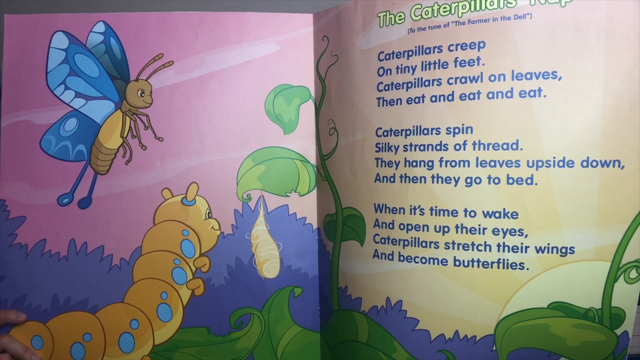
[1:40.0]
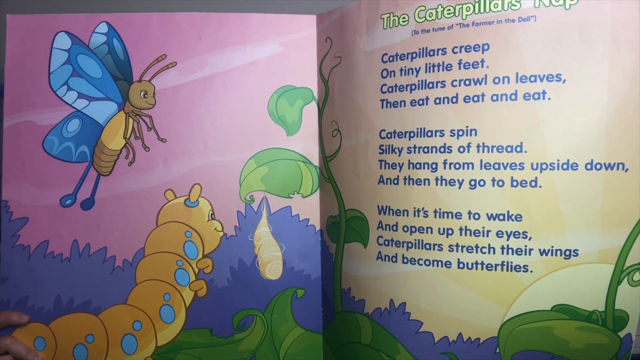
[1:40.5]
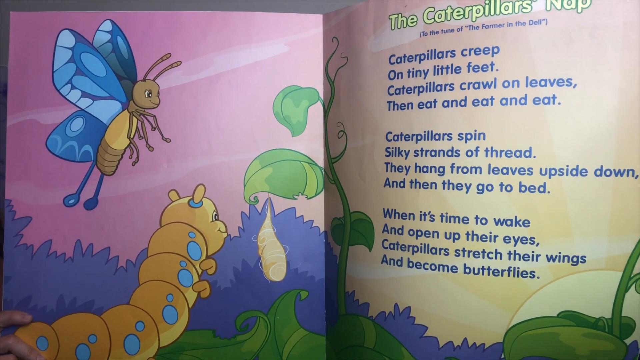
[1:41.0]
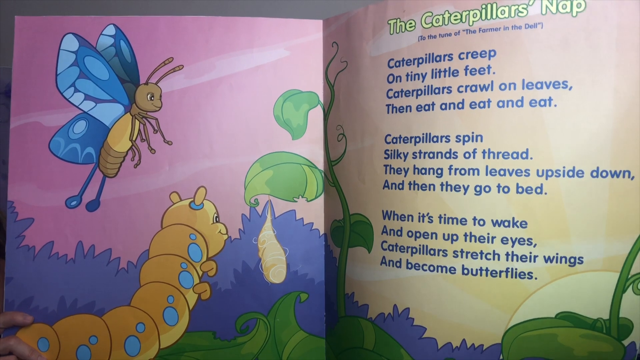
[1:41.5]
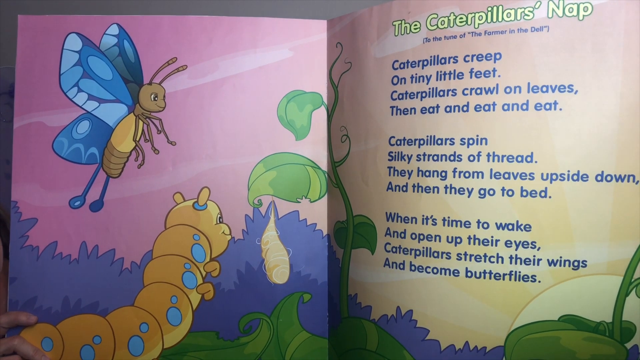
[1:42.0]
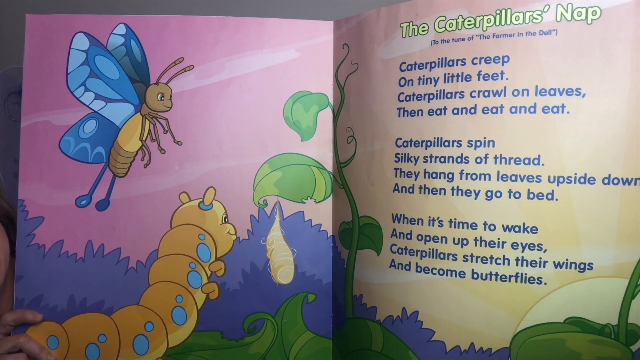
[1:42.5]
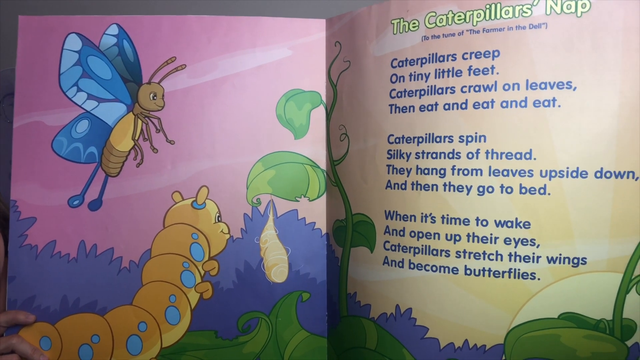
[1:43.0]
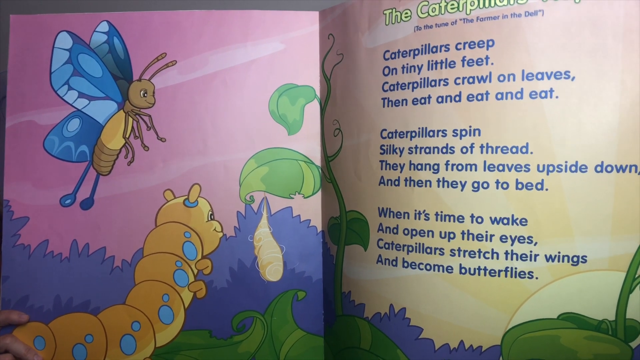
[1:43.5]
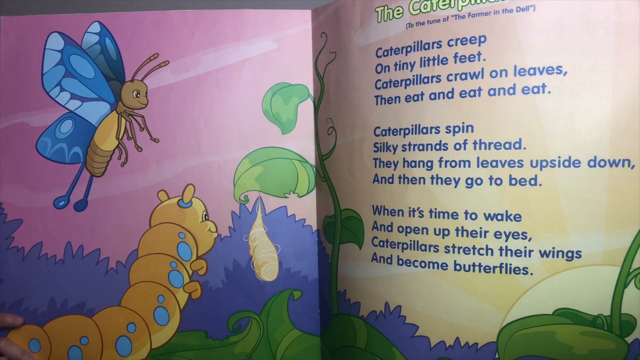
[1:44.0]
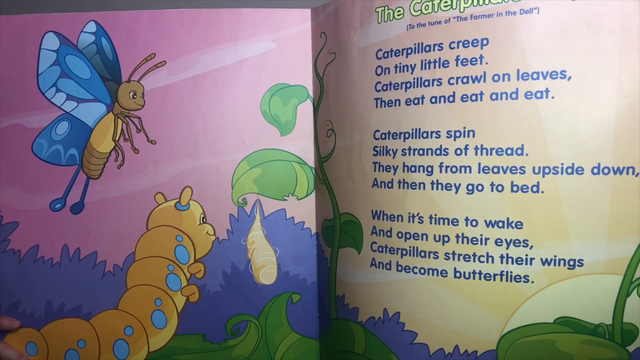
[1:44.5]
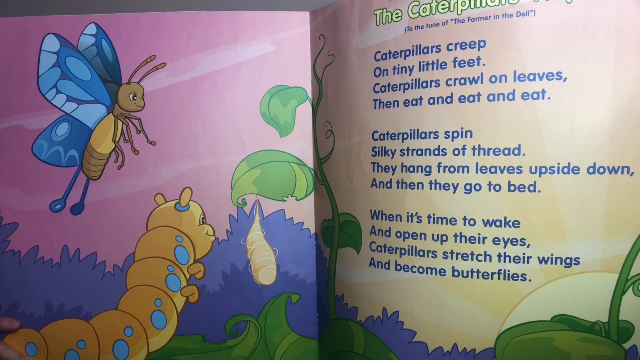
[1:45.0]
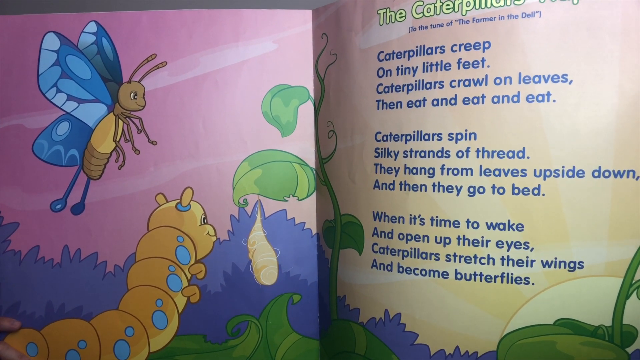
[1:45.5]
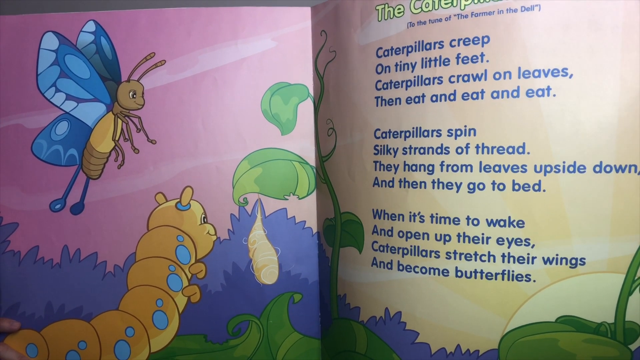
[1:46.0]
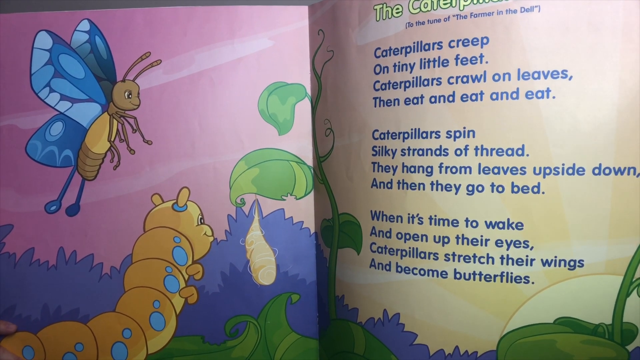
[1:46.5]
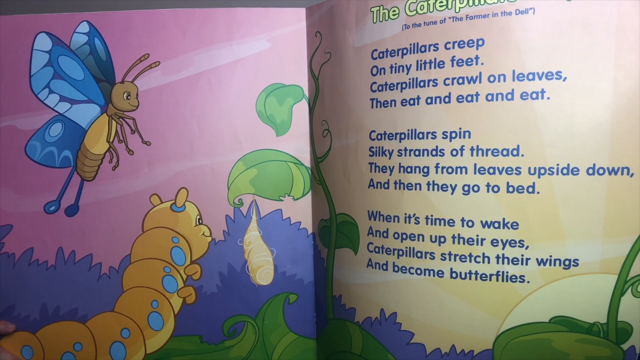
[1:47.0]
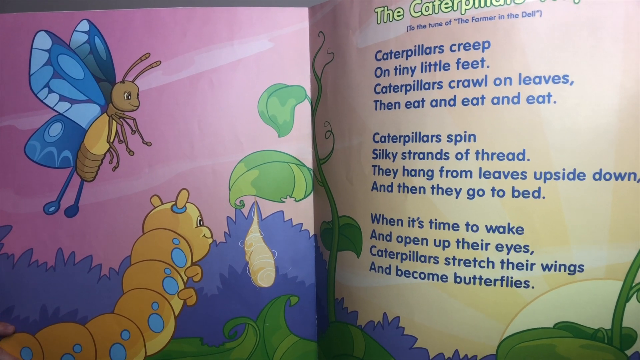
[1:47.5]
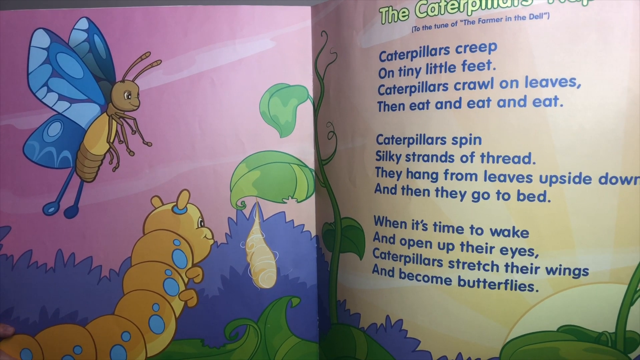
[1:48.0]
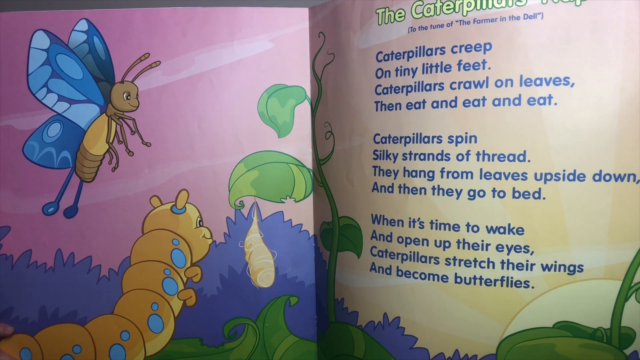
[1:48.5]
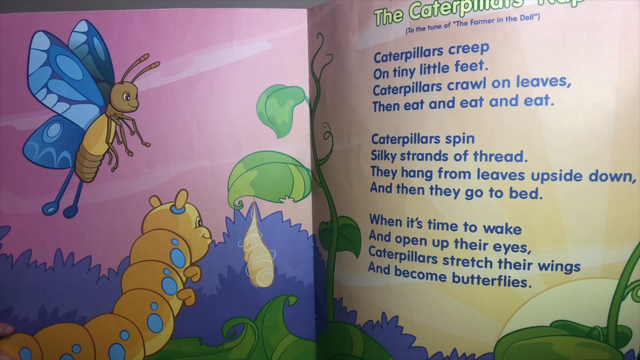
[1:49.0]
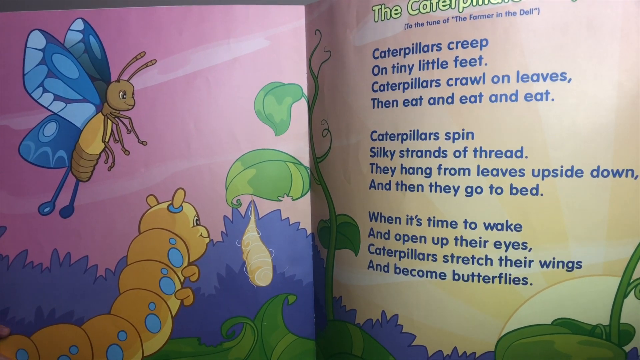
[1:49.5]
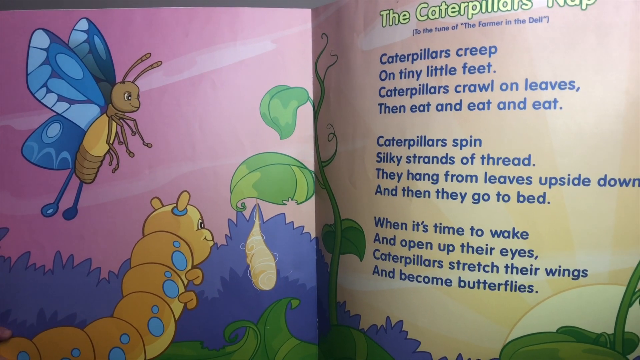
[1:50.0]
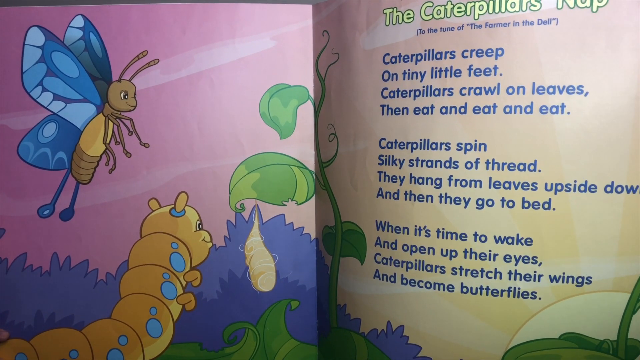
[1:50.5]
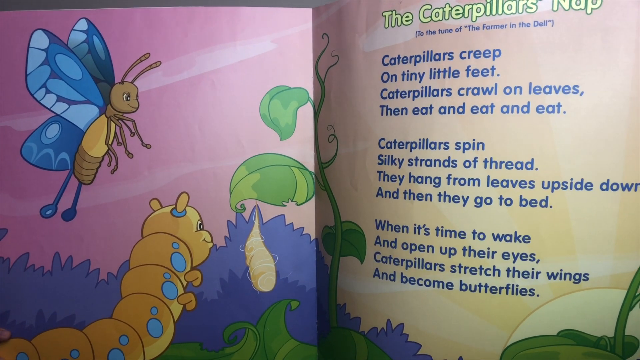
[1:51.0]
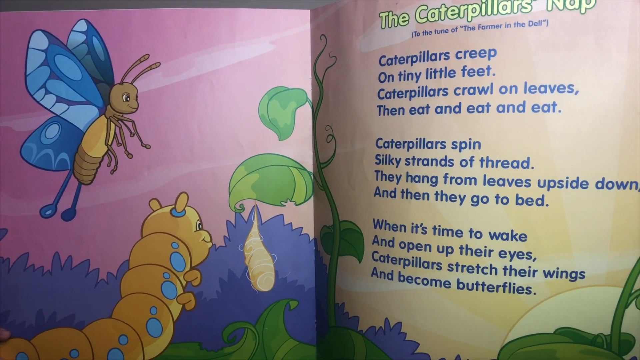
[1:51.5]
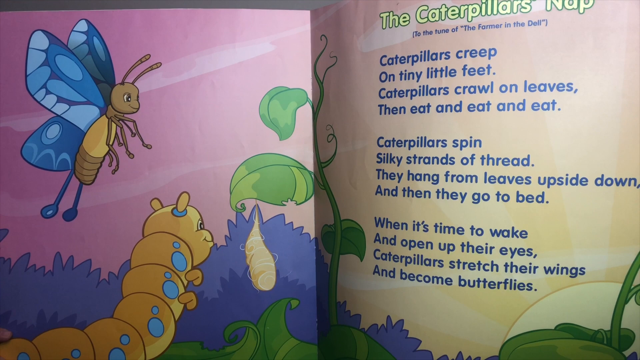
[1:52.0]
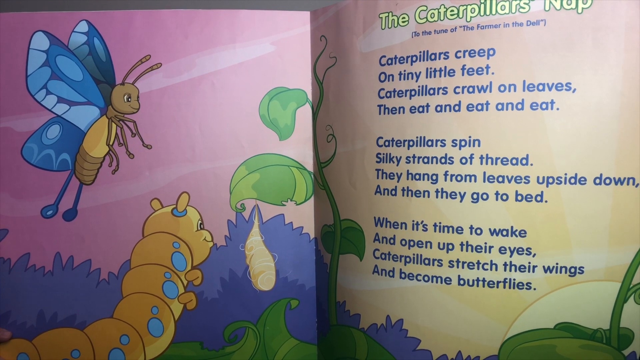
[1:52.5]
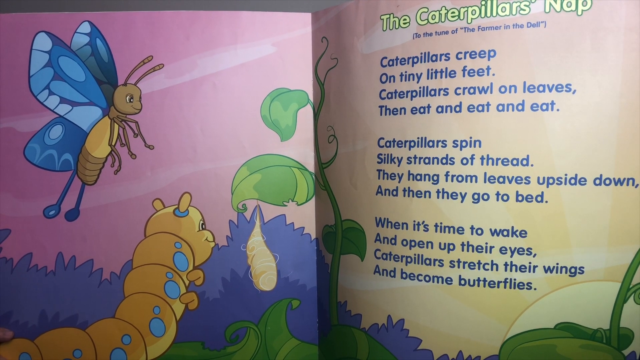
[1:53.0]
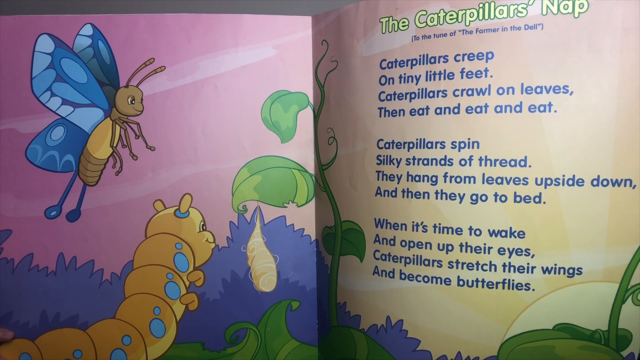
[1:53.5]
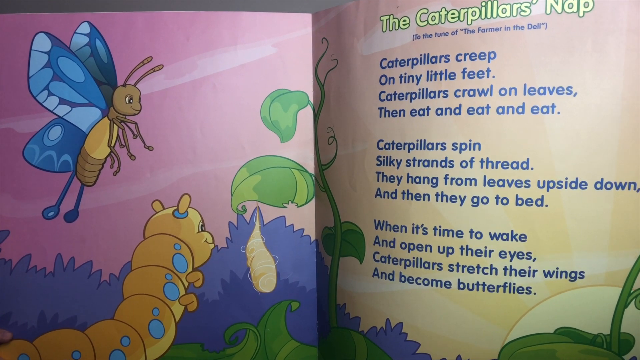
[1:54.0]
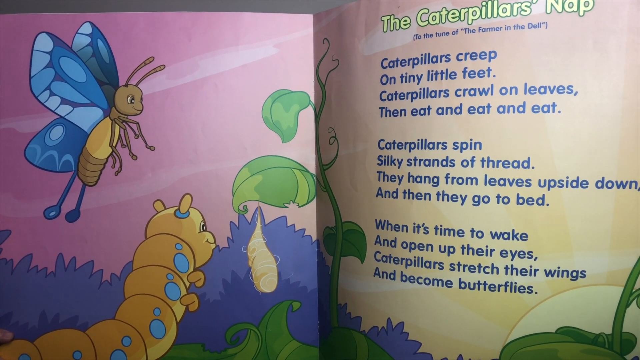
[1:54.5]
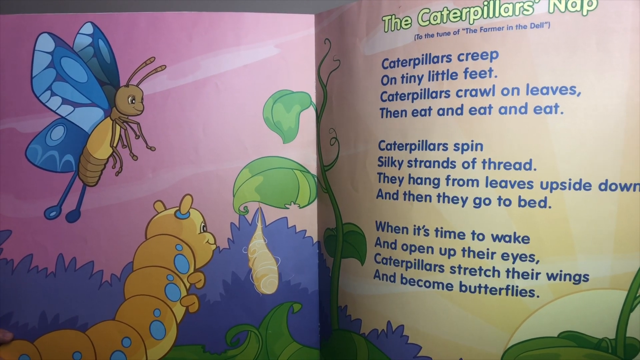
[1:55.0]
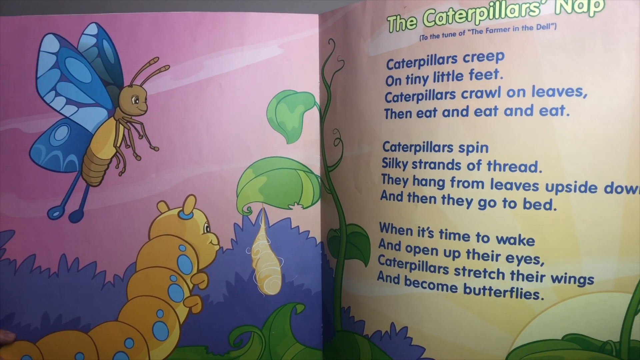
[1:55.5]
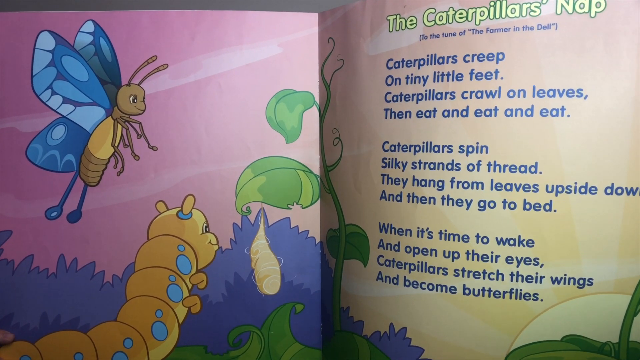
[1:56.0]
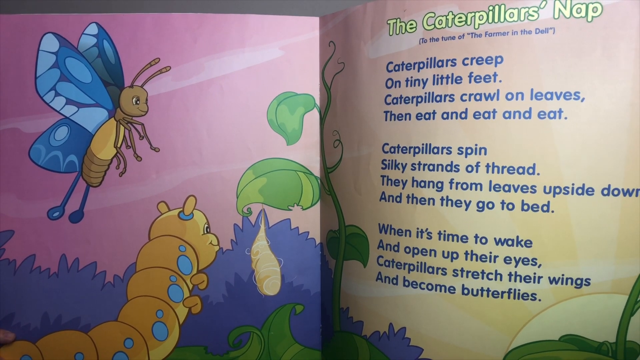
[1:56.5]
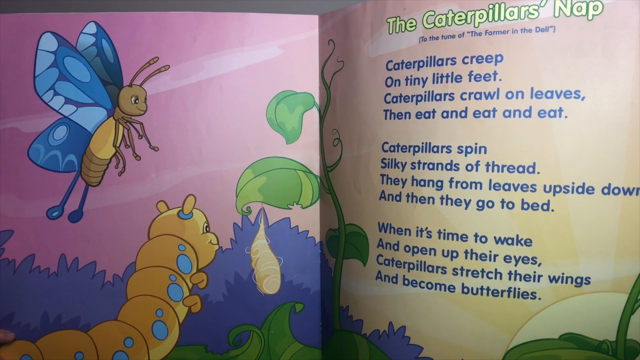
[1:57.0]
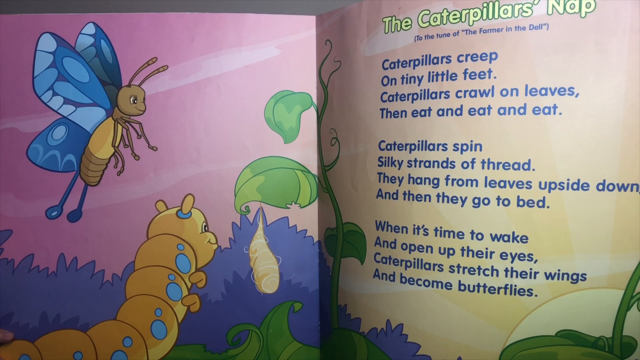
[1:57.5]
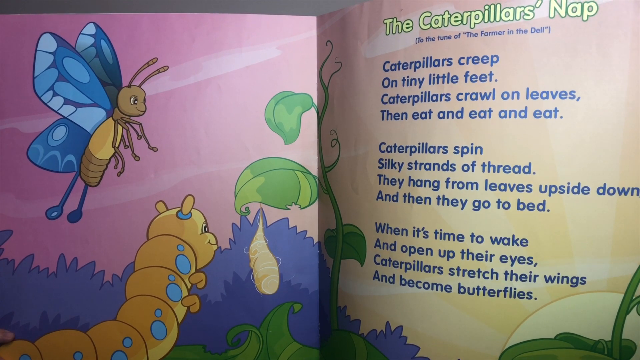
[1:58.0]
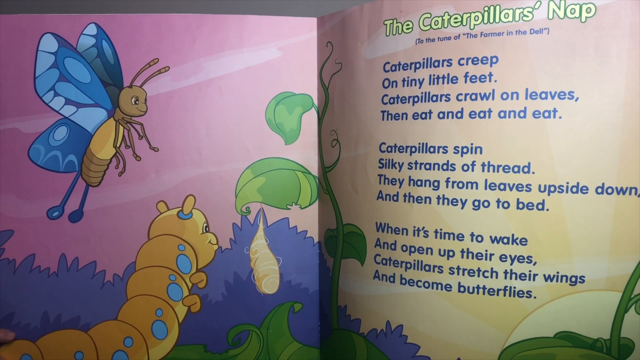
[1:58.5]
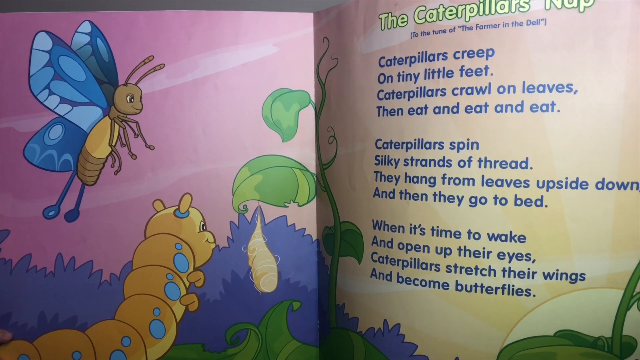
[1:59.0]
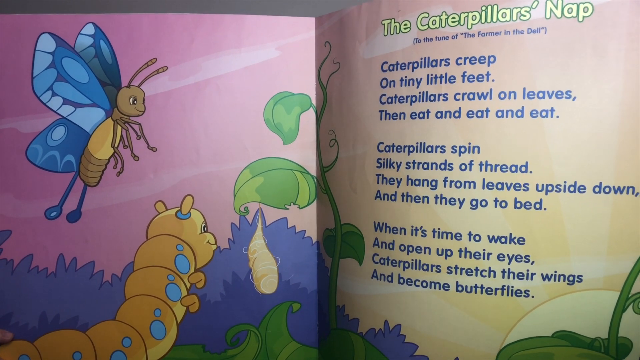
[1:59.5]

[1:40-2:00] The book is still on the same page, but she is now shaking it a little after holding it up for about a minute. More of the leaves at the bottom are visible. Something has a brown head and a brown tail, and the background has shining elements. The bushes are different shades of purple, and all of the caterpillar's spots are the same.